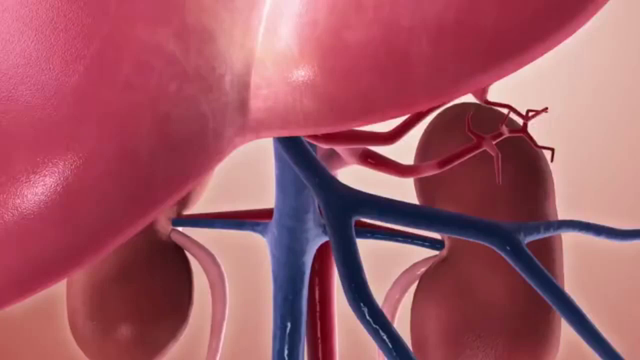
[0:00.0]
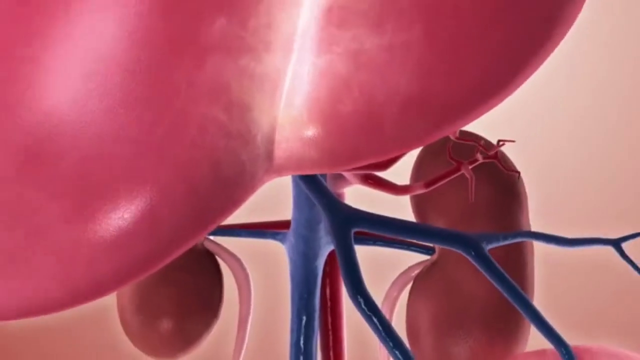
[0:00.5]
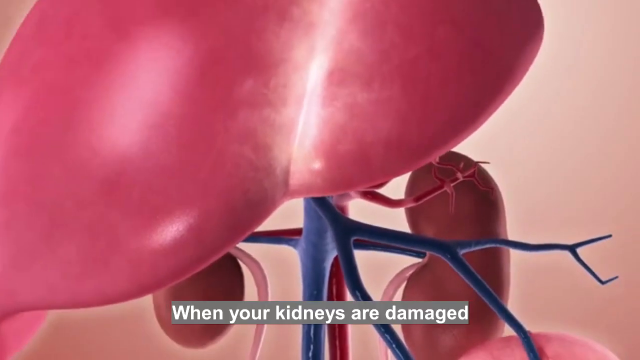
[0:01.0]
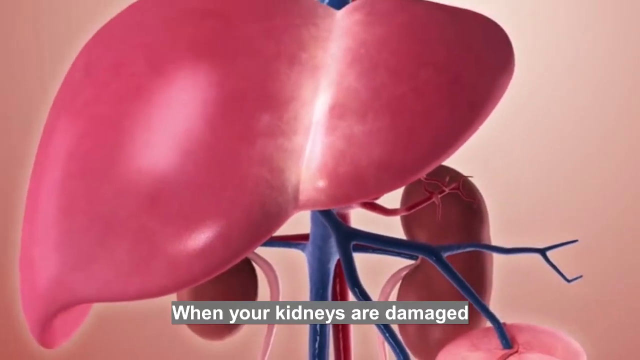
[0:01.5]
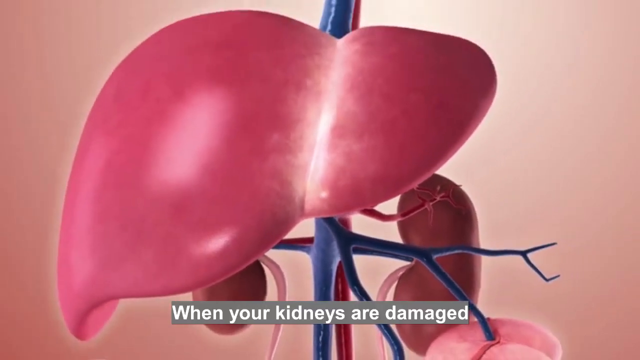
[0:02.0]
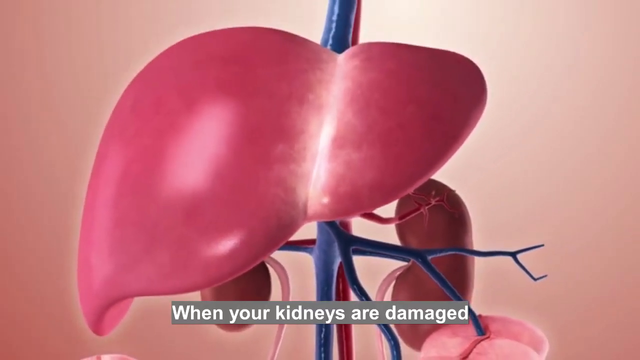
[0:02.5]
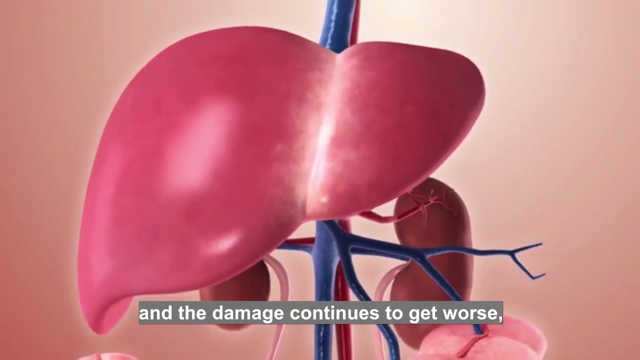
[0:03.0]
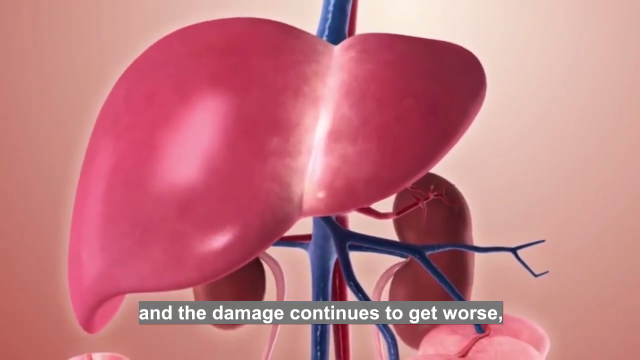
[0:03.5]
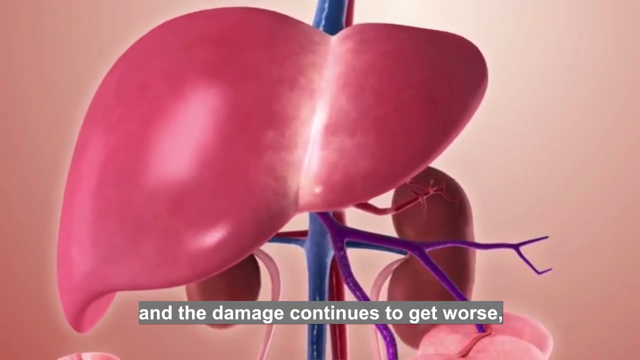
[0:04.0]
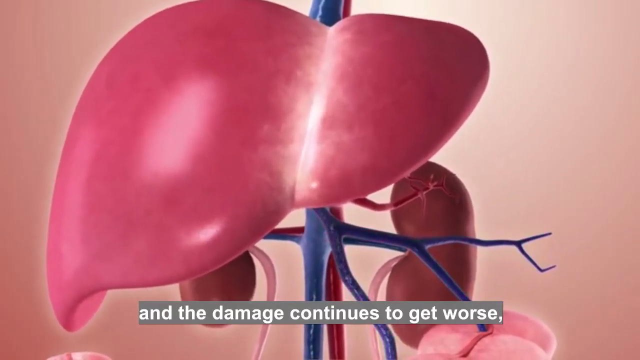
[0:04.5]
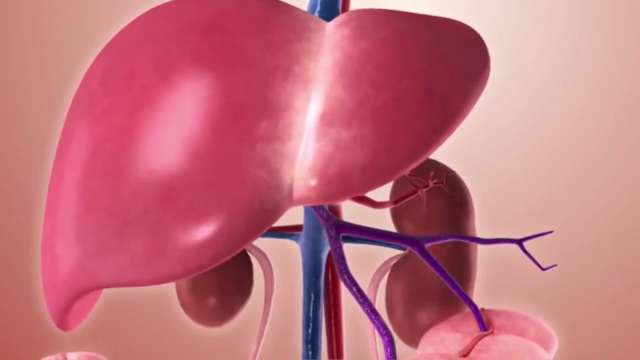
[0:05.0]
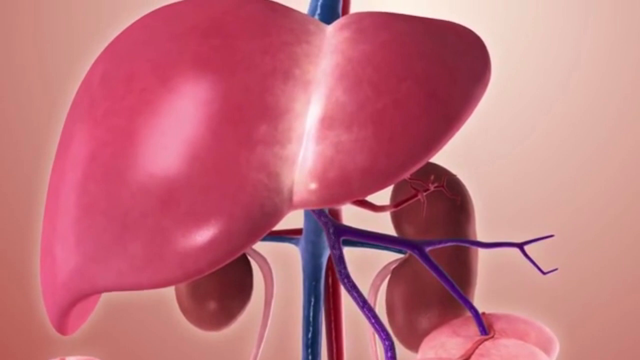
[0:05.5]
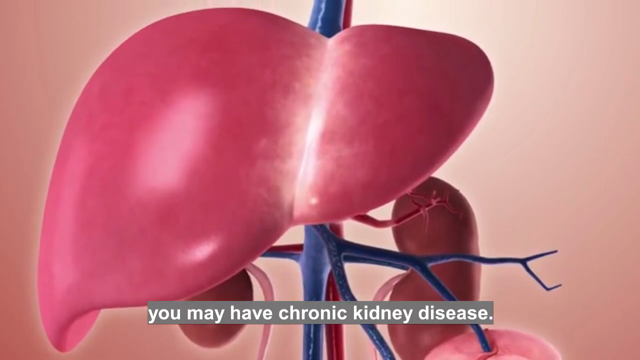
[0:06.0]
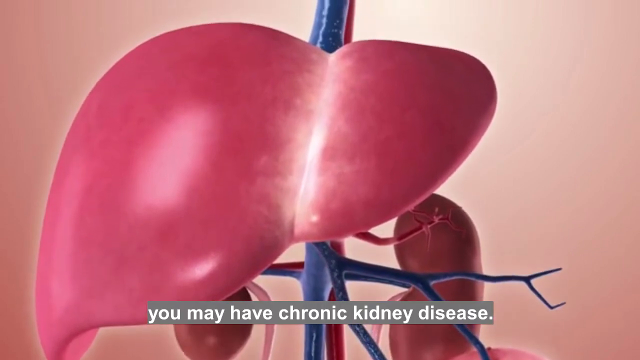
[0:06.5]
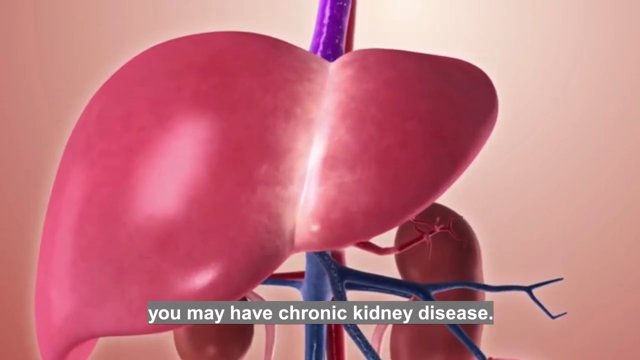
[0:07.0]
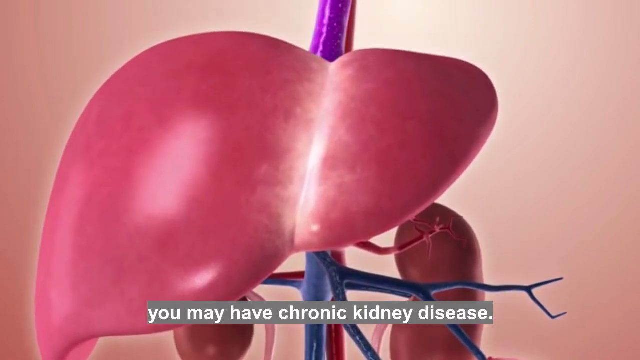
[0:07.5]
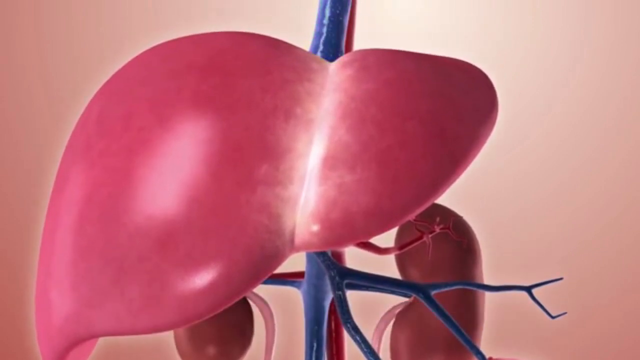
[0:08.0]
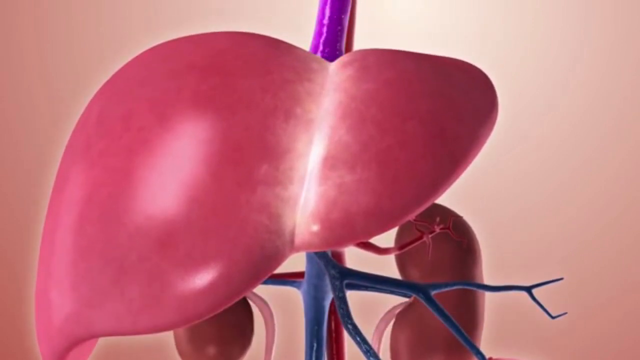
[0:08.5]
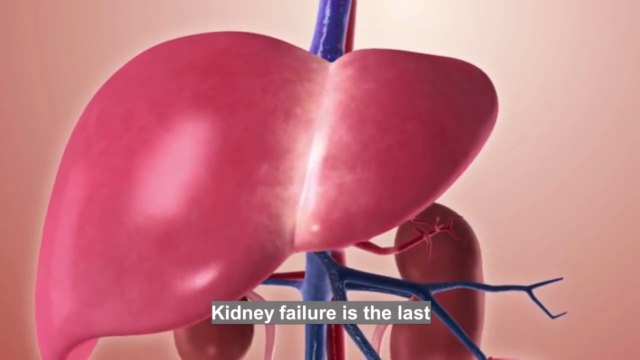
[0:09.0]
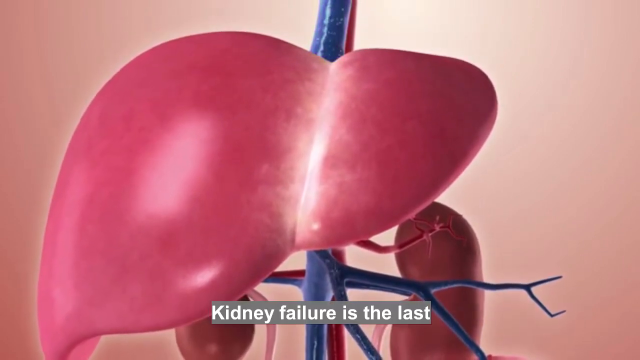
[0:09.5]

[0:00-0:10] The video opens on a zoomed-in image with some red in the upper left corner and some blue in the center that kind of looks like veins. There appear to be kidneys in the background on the left and right. The view zooms out, and text at the bottom discusses kidney damage. Zooming out further reveals what looks like the liver and the kidneys. The text reads "When your kidneys are damaged and the damage continues to get worse, you may have chronic kidney disease." Then text about kidney failure appears, beginning "kidney failure is the last".